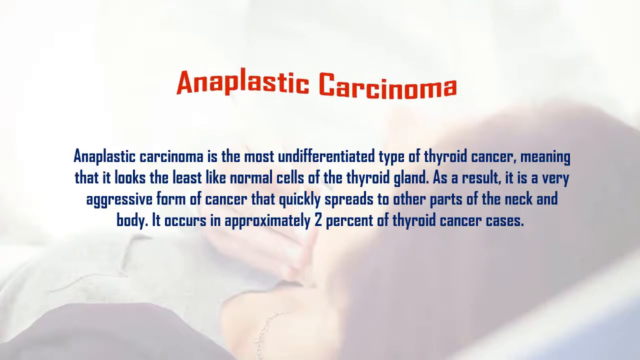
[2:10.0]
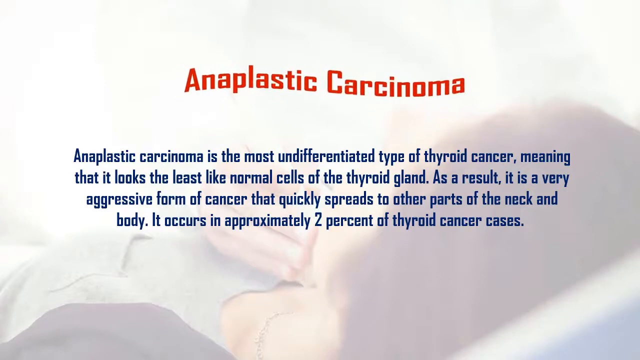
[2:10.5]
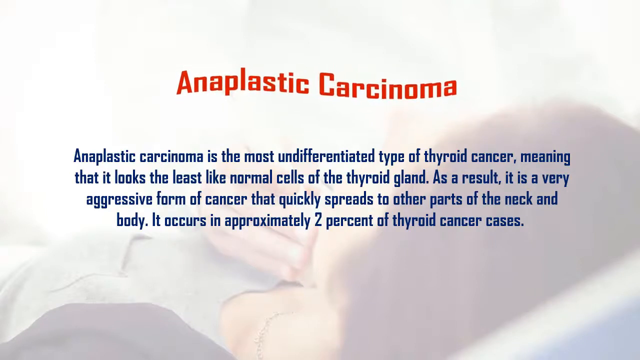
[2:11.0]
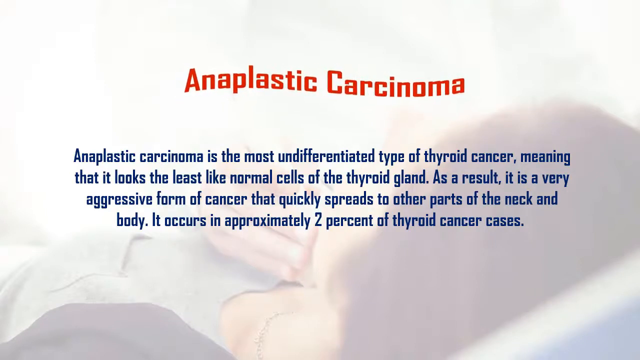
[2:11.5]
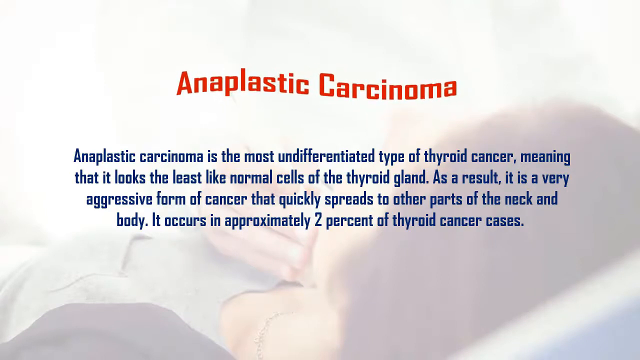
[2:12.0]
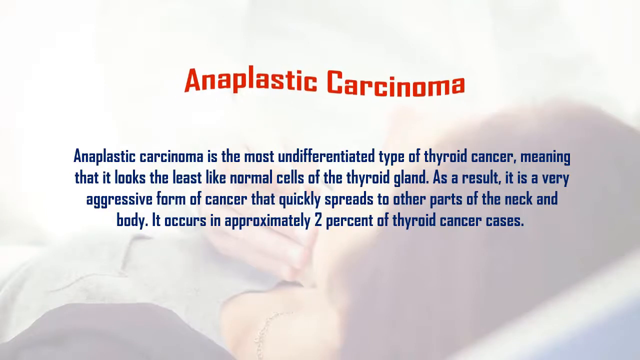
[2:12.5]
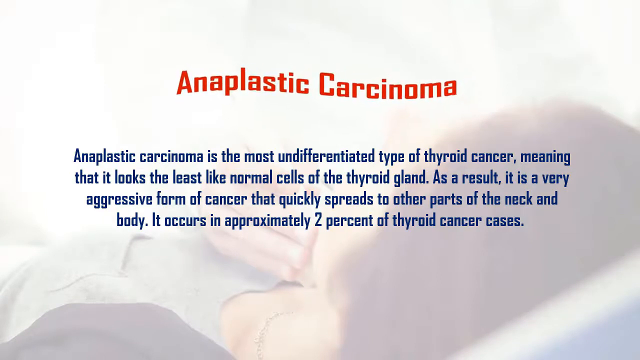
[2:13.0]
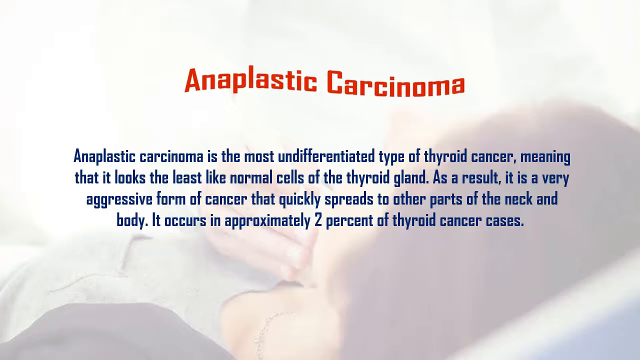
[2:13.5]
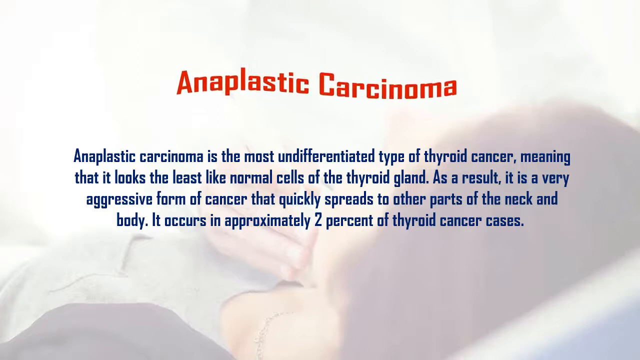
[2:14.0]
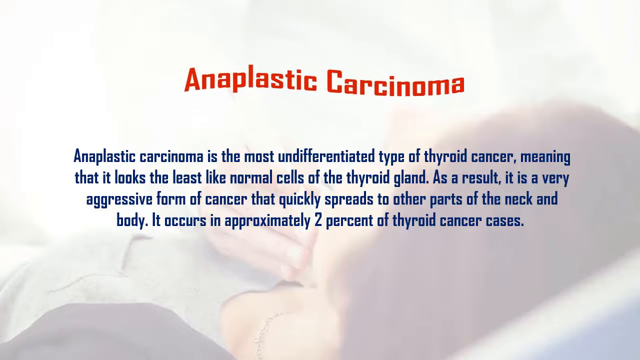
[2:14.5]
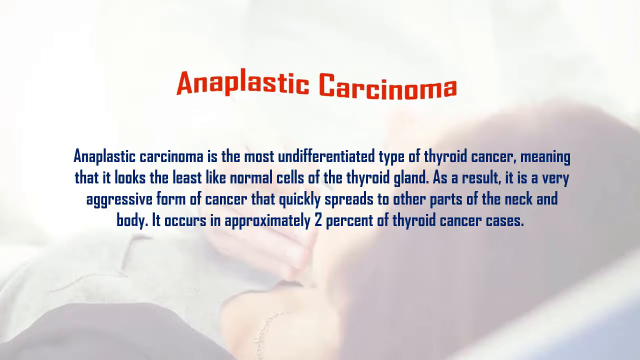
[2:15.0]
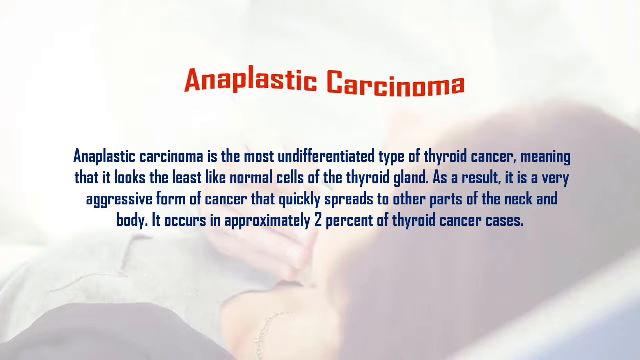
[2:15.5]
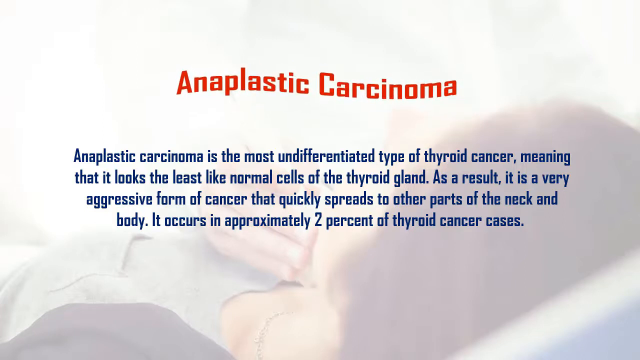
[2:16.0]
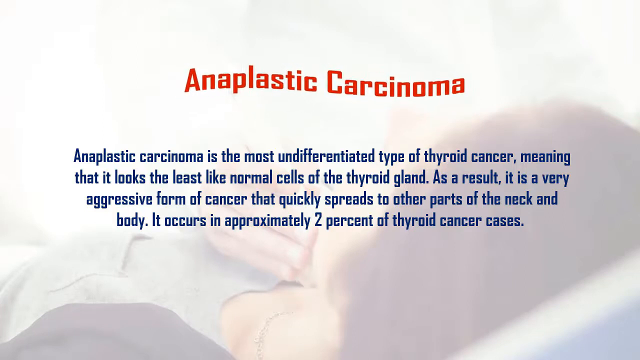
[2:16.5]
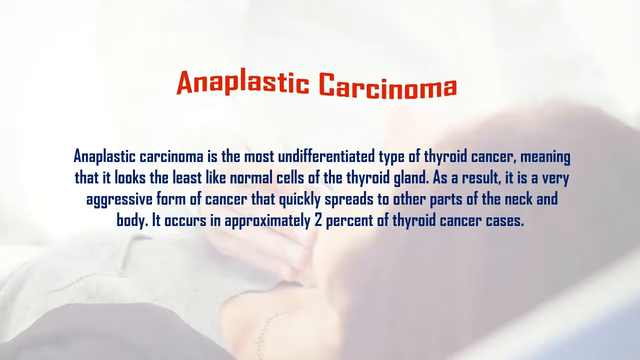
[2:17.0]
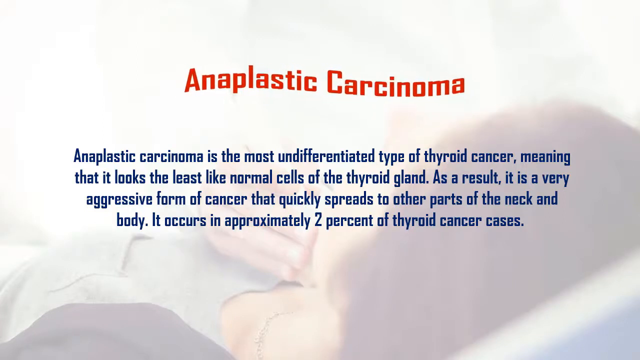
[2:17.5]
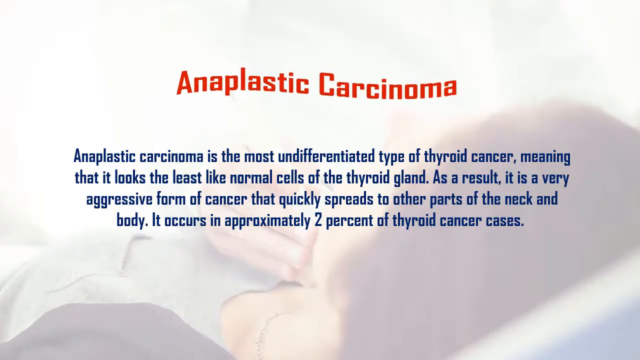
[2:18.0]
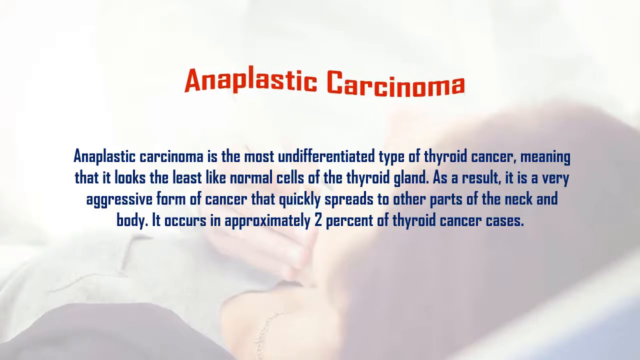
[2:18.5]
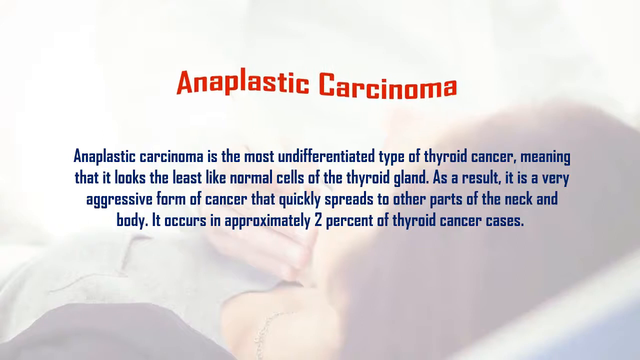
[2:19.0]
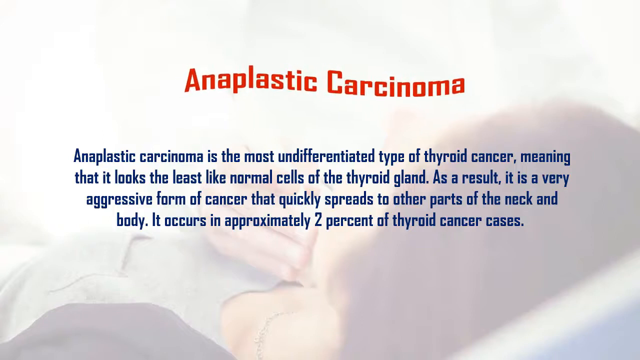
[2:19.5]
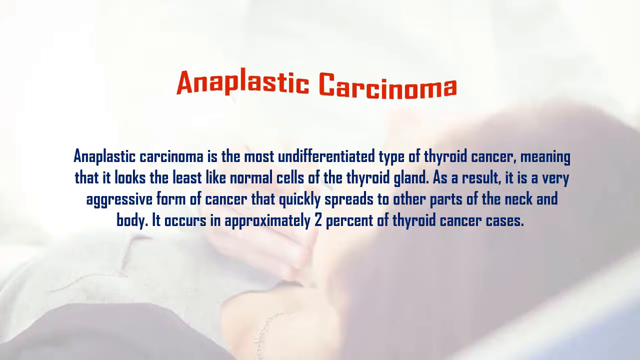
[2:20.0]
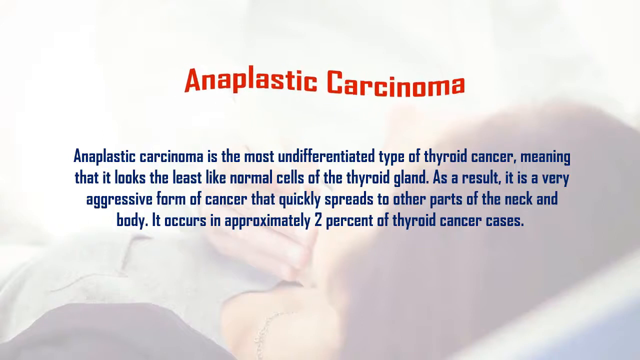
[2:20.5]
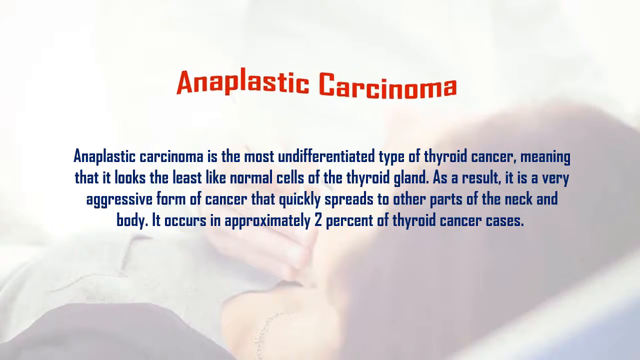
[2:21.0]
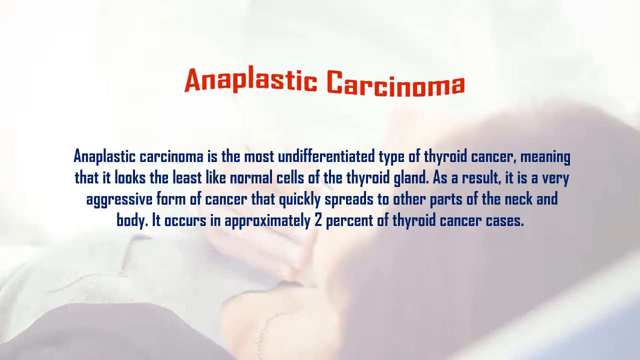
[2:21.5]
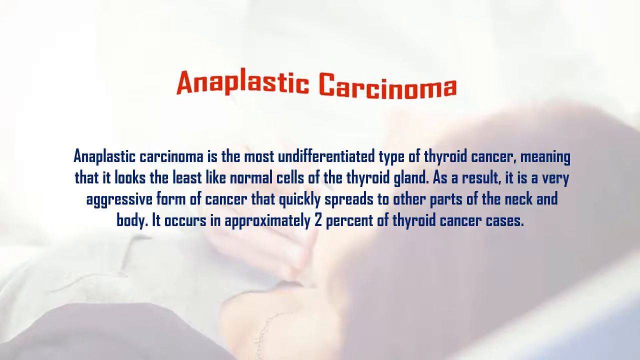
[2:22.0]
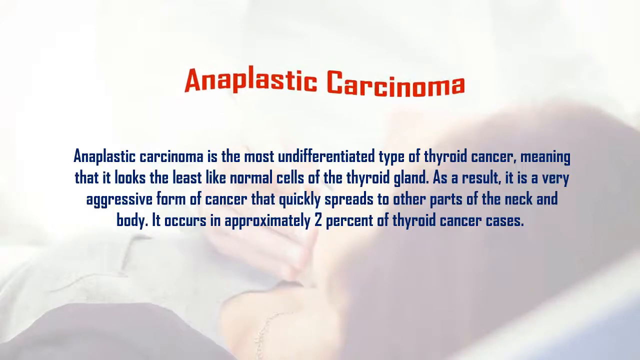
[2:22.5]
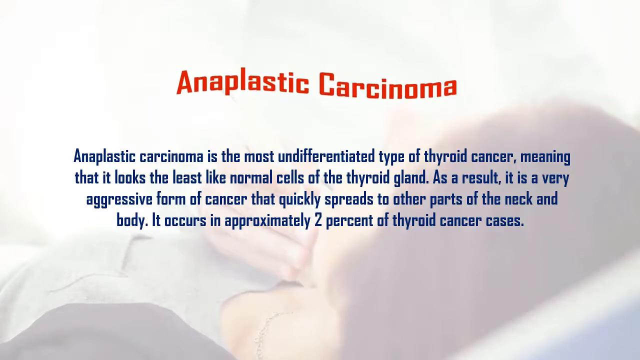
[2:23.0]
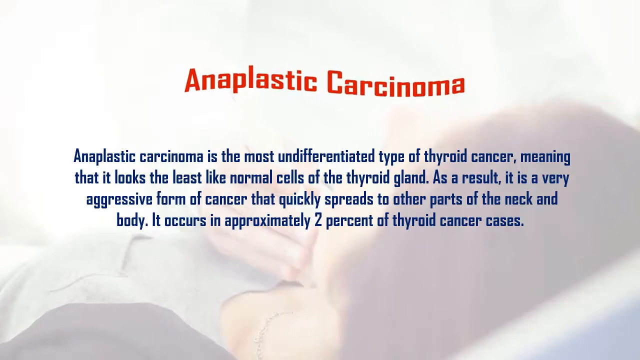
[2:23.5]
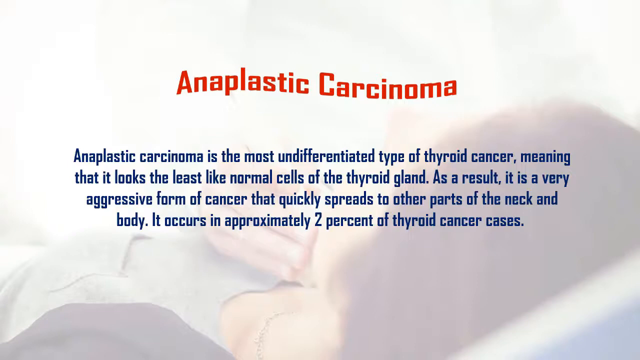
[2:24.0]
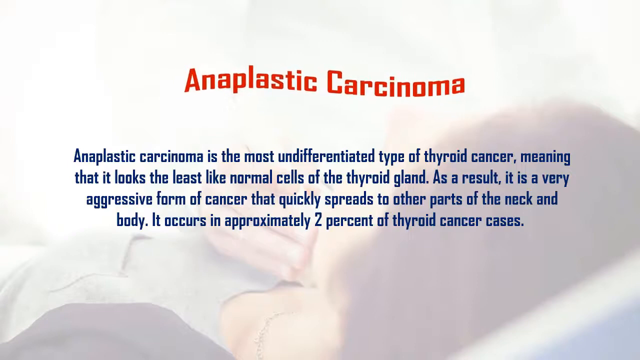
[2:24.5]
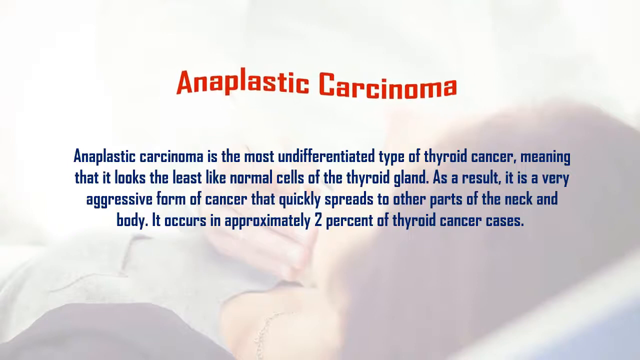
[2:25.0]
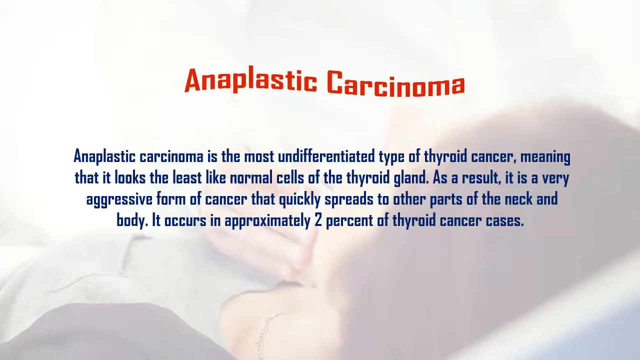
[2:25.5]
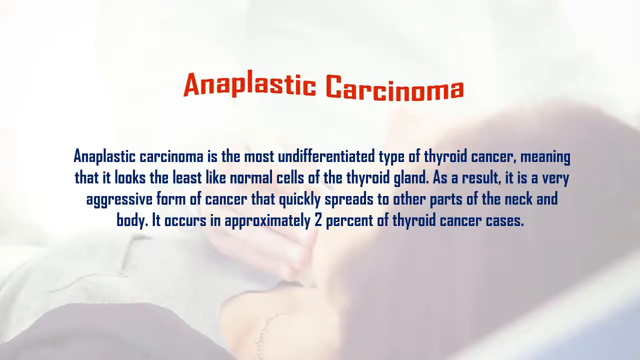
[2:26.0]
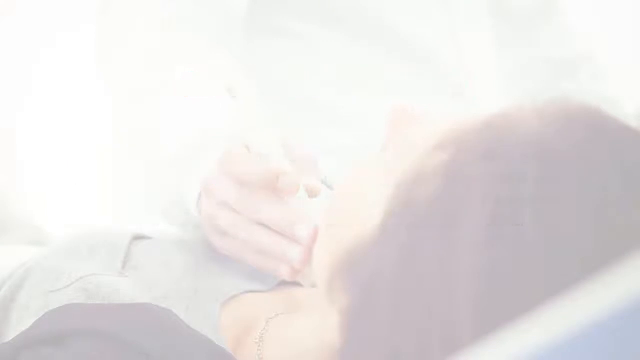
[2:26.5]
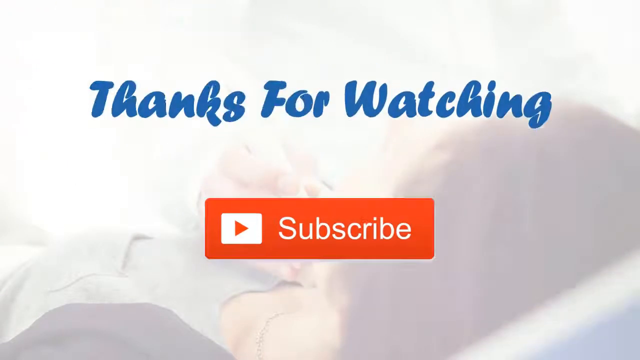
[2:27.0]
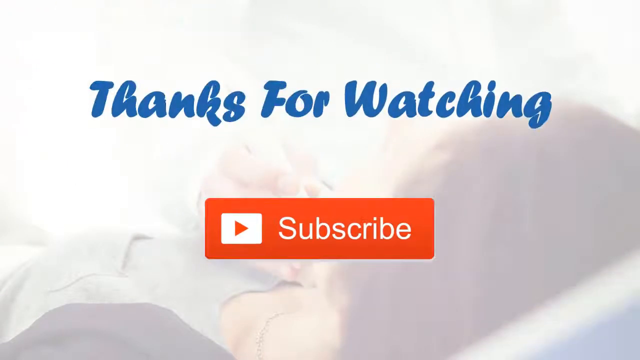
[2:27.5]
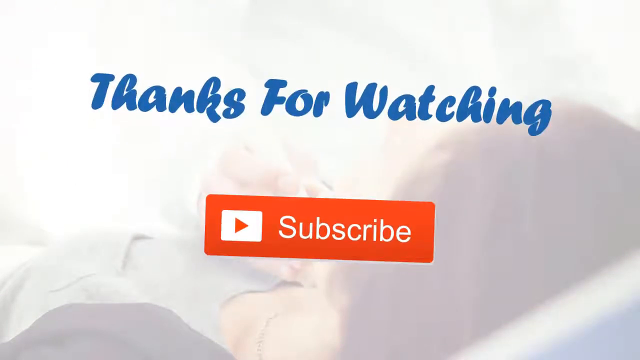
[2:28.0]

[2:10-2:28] A scene in very muted colours shows a woman lying on her back, perhaps being examined, with a hand on her throat. More prominent is the title at the top center in red text, reading "anaplastic carcinoma," which moves clockwise. Below it, smaller blue text reads "anaplastic carcinoma is the most undifferentiated type of thyroid cancer, meaning that it looks the least like normal cancers of the thyroid gland. As a result it is a very aggressive form of cancer and that quickly spreads to other parts of the neck and body. It occurs in approximately 2% of thyroid cancer cases." The video then closes with "Thanks for watching" at the top of the screen.